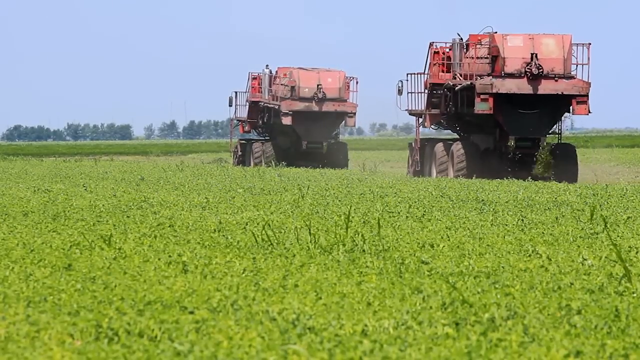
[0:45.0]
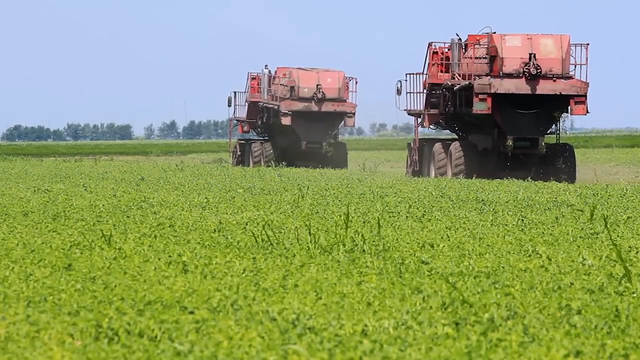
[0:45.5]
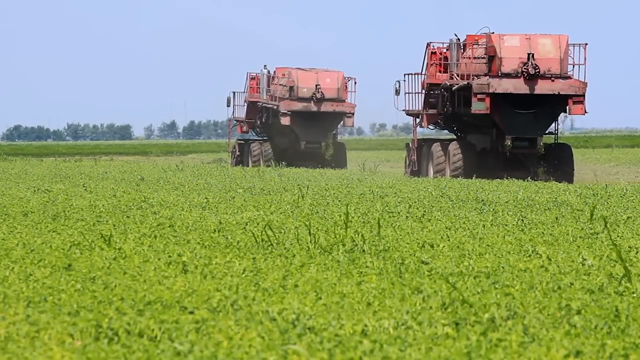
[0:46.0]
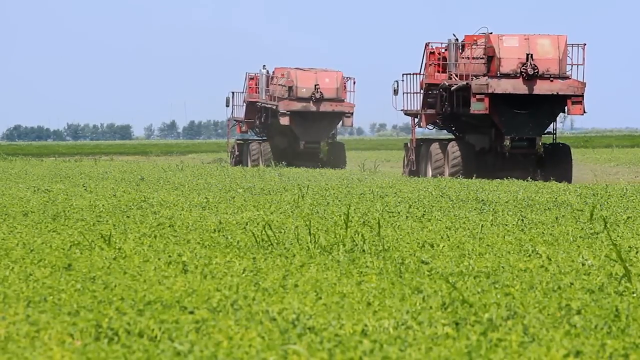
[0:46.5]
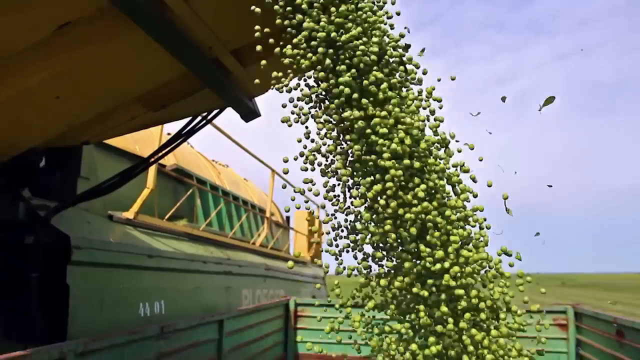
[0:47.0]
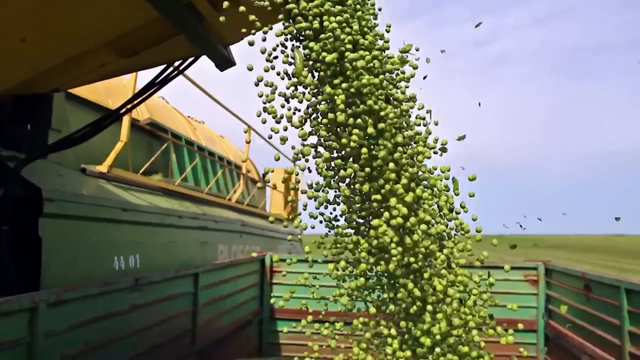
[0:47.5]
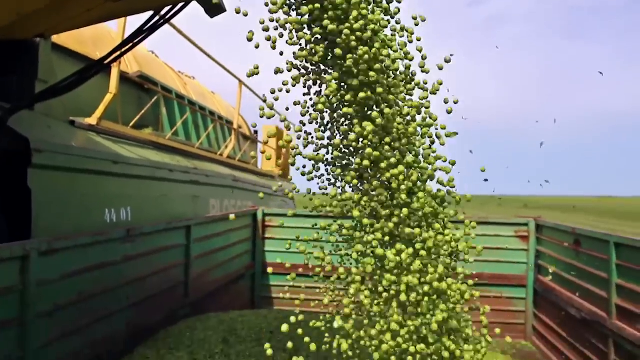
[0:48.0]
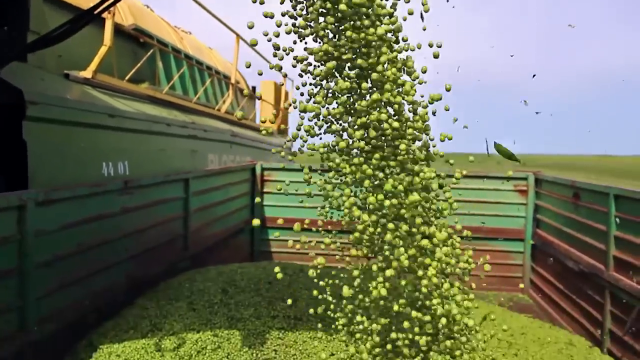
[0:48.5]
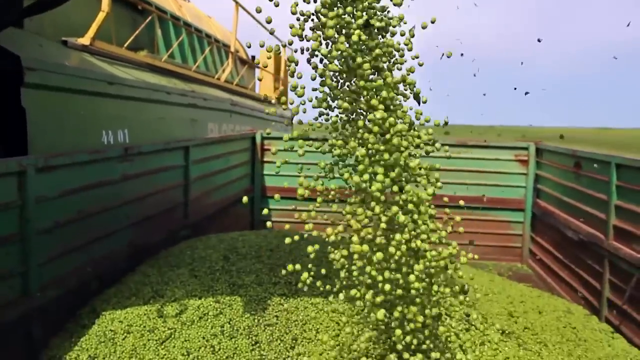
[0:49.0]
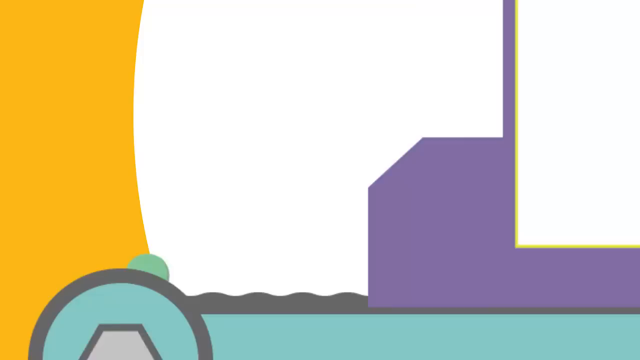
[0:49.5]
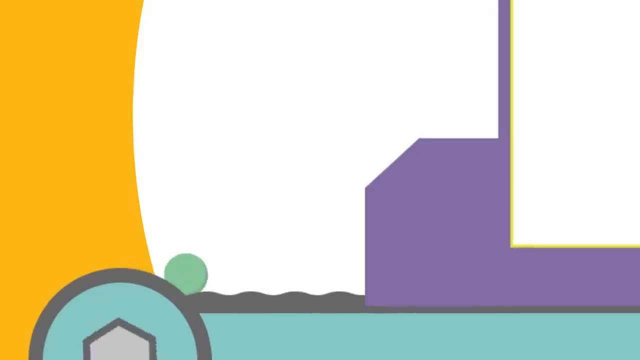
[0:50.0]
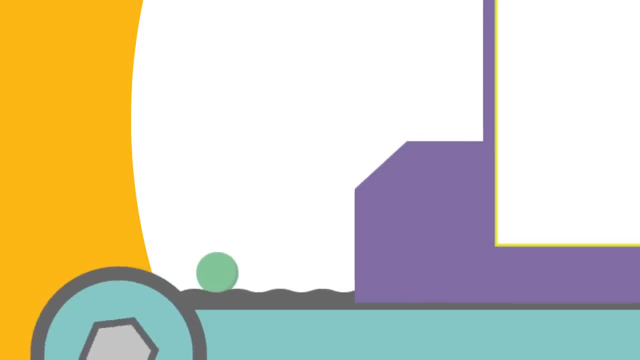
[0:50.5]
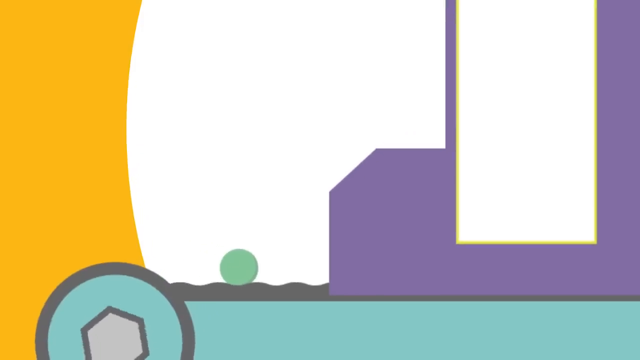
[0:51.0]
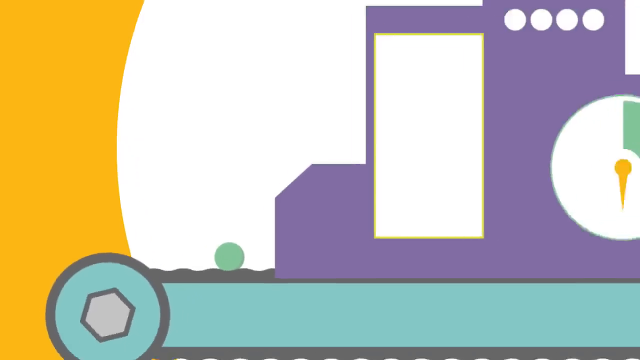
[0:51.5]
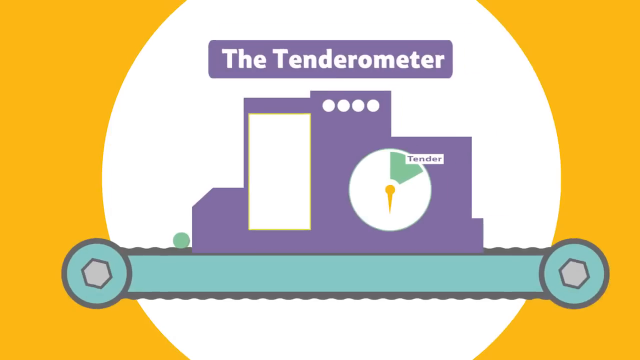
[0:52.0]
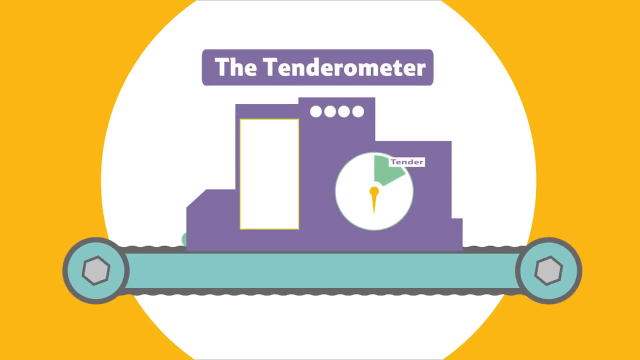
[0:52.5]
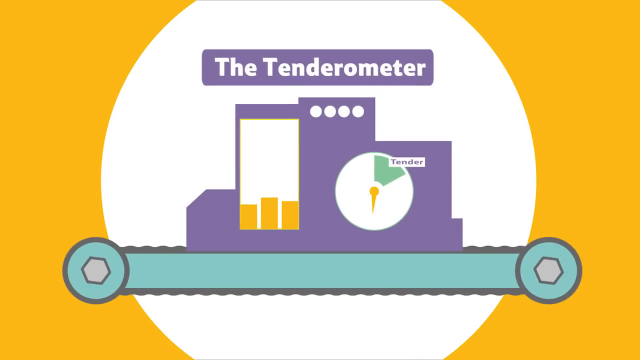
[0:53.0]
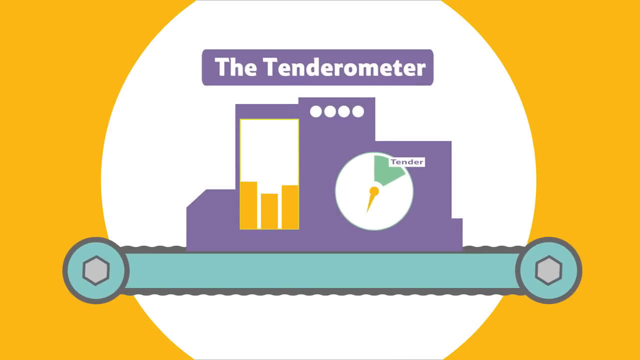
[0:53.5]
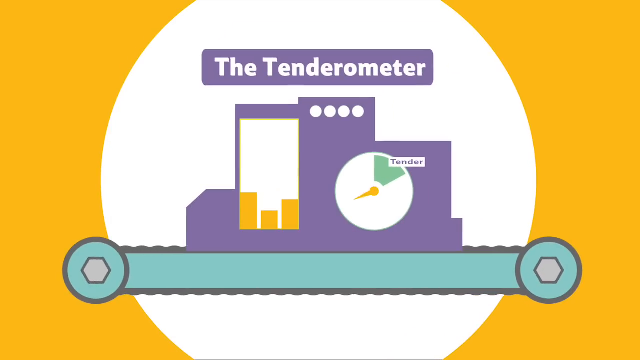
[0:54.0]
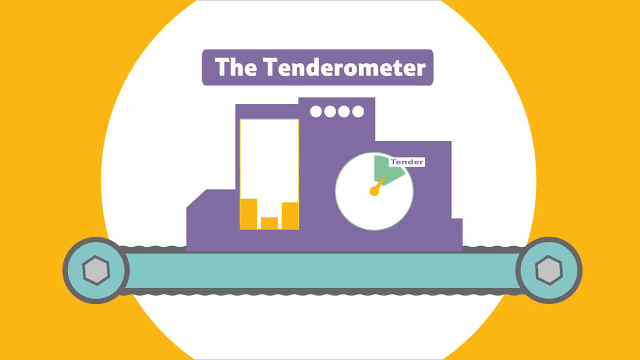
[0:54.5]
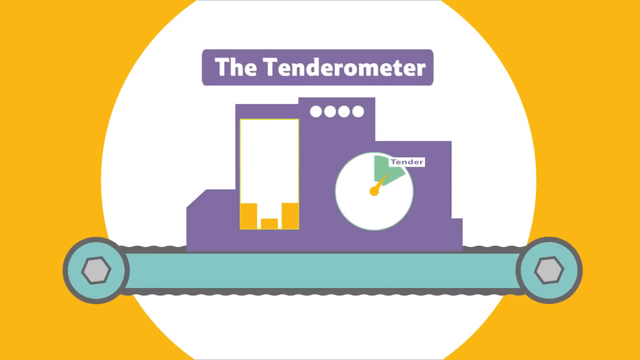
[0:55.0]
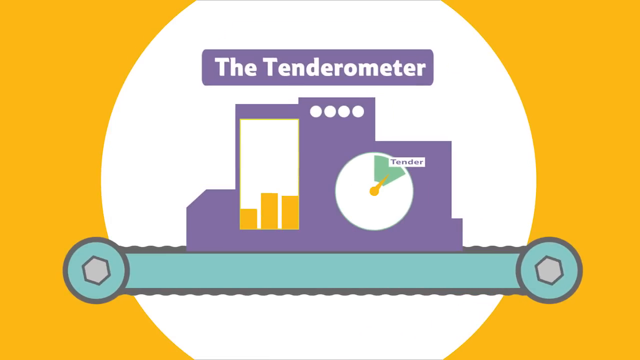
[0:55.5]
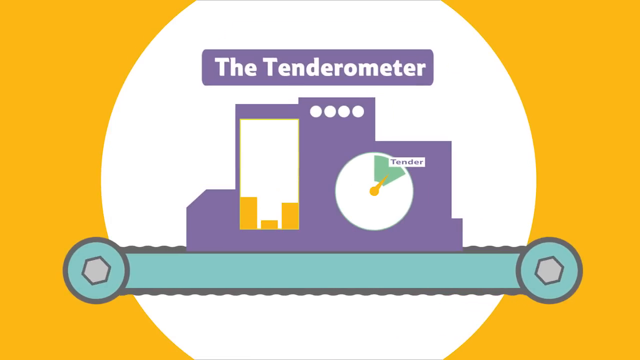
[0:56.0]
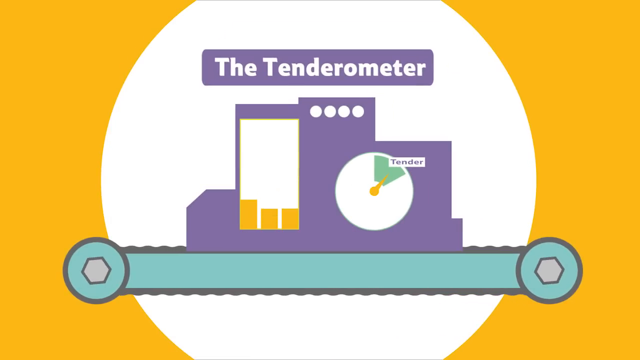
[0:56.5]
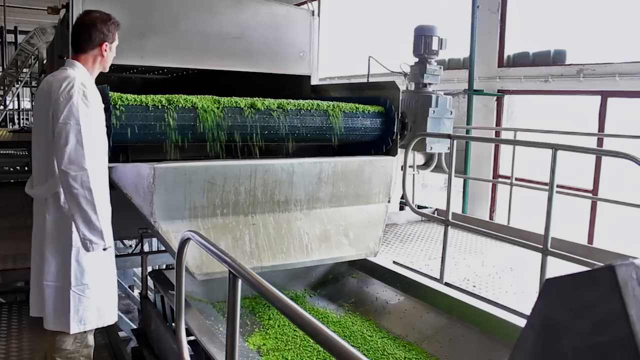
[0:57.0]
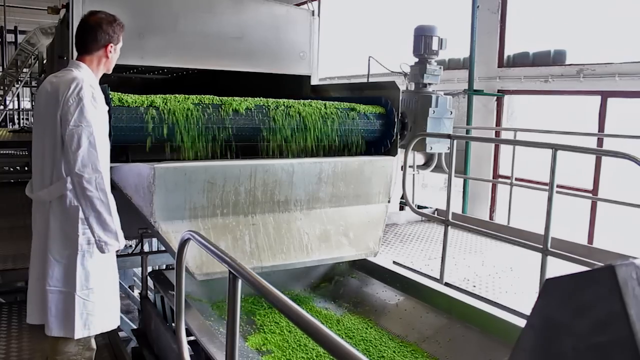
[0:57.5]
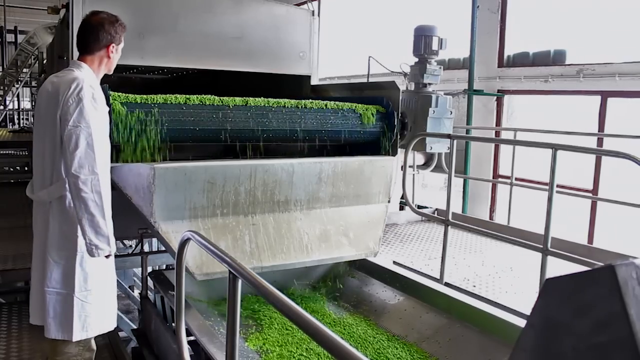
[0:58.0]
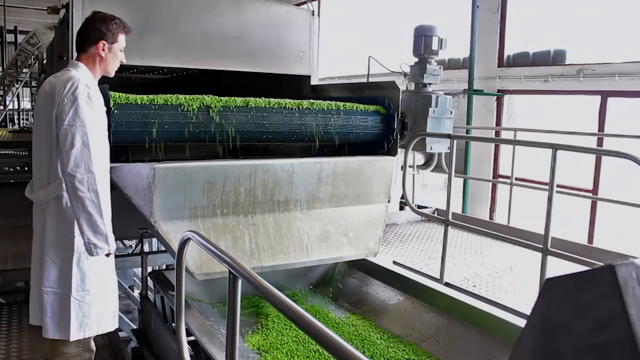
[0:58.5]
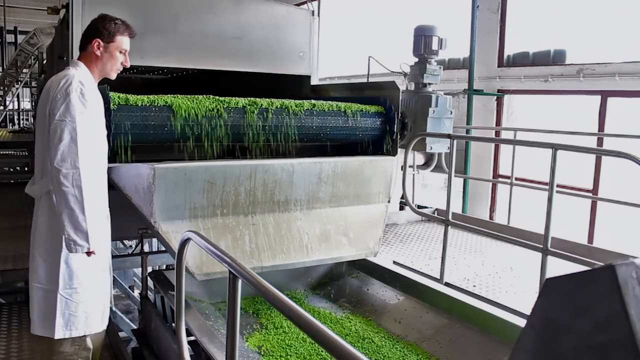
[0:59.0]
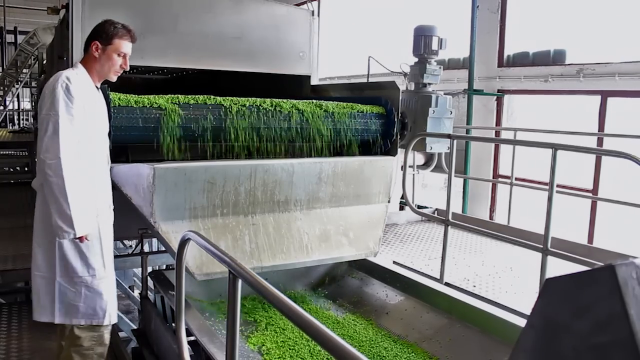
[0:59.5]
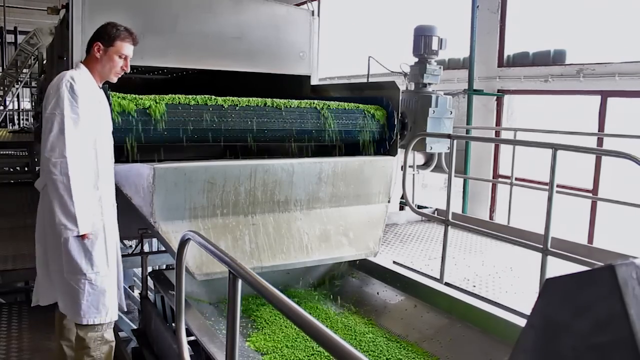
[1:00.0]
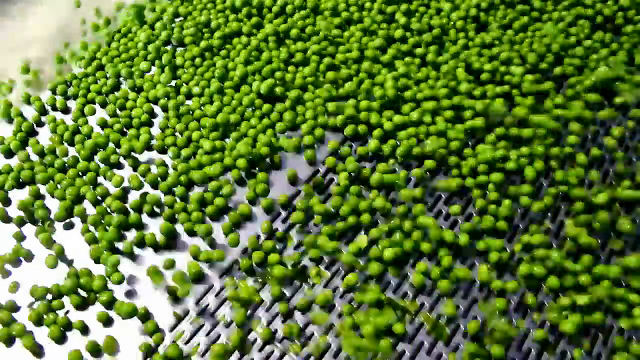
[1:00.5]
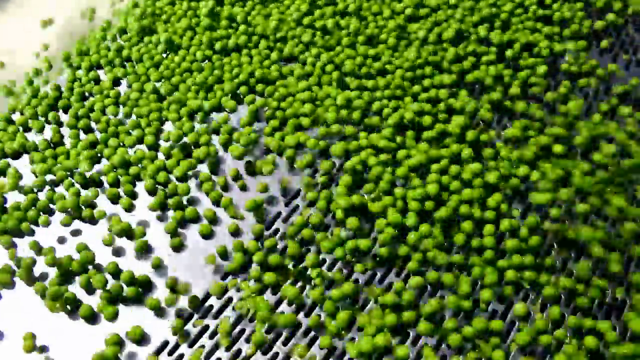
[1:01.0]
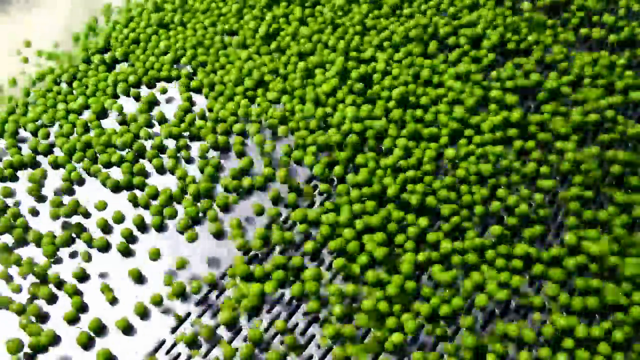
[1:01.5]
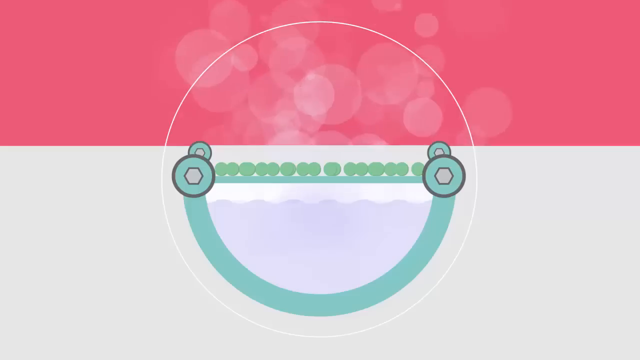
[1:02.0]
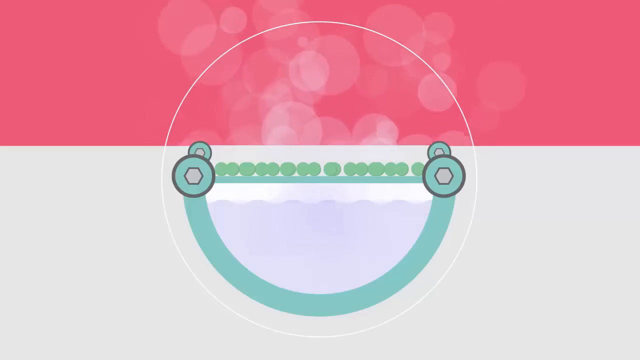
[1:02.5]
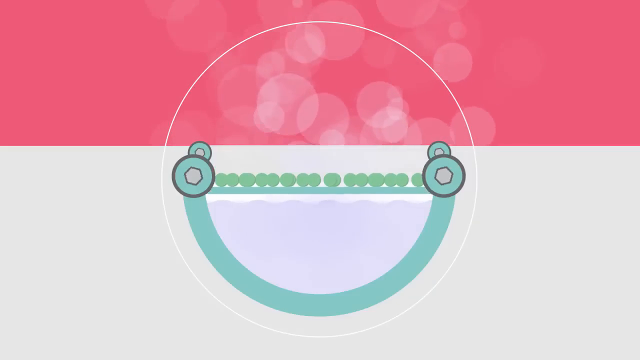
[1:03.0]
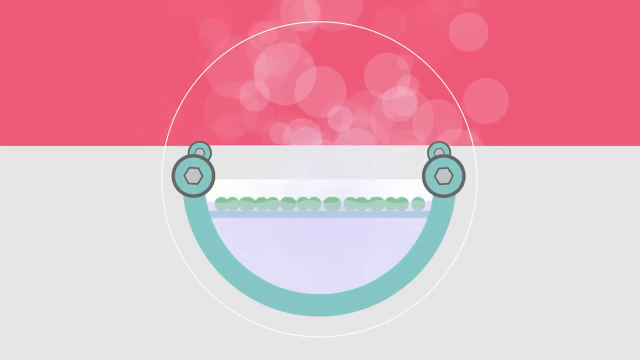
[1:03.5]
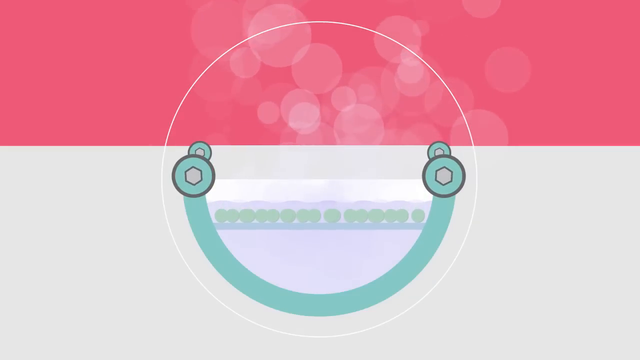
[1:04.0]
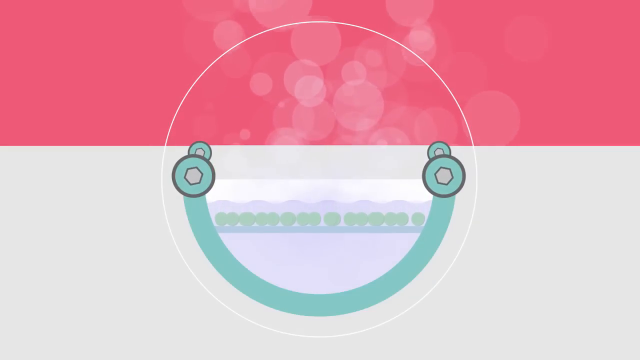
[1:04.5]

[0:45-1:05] Two machines harvesting peas in the field drive away. One of the machines then dumps a large amount of shelled peas into another container, outdoors. The view changes to an illustration showing how the harvester works, in which it is labeled "tender-o-meter." Next, inside a factory, a white man stands watching peas come off a contraption and fall into another container. From there, the peas roll down into another area.